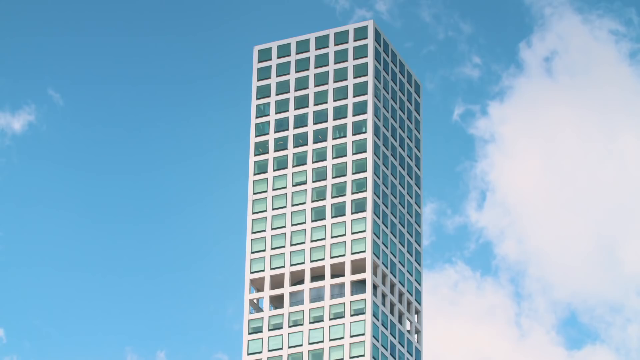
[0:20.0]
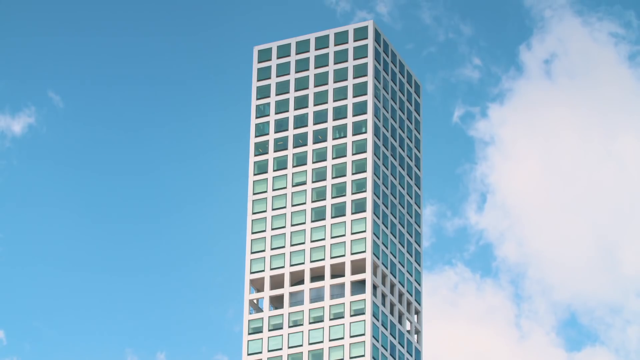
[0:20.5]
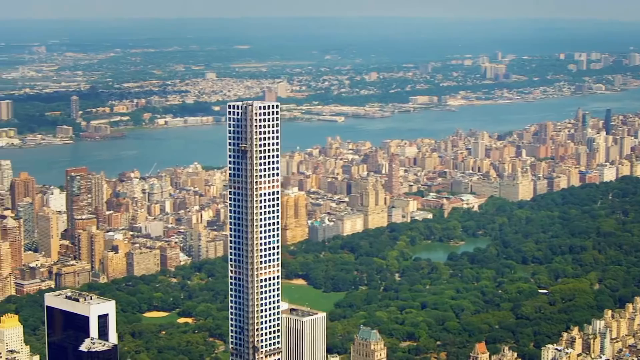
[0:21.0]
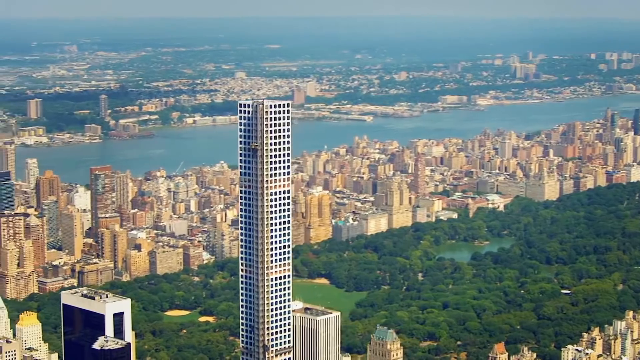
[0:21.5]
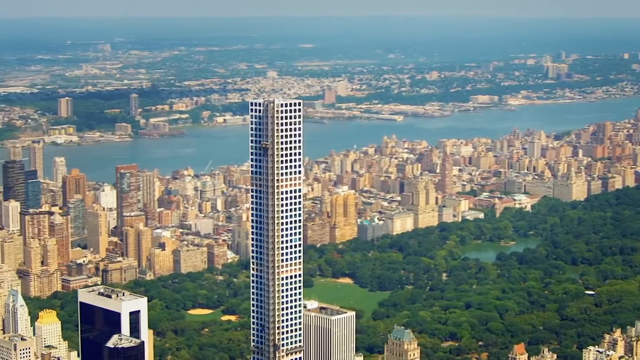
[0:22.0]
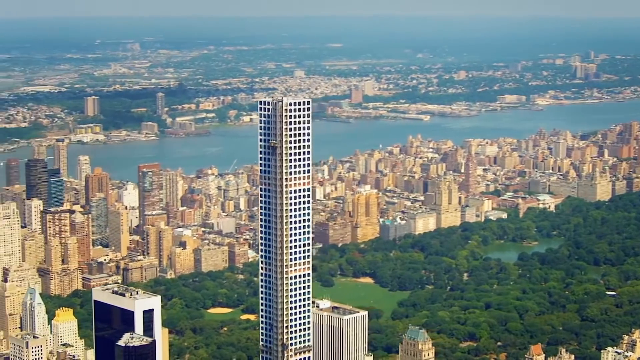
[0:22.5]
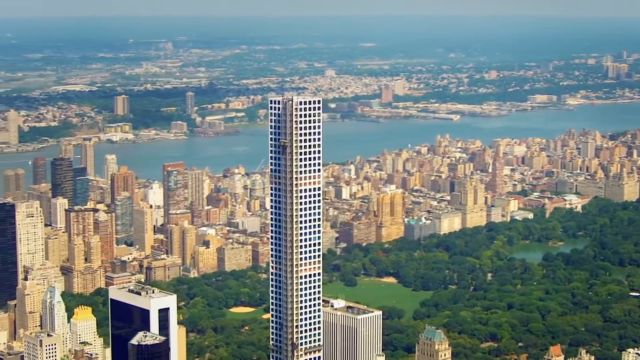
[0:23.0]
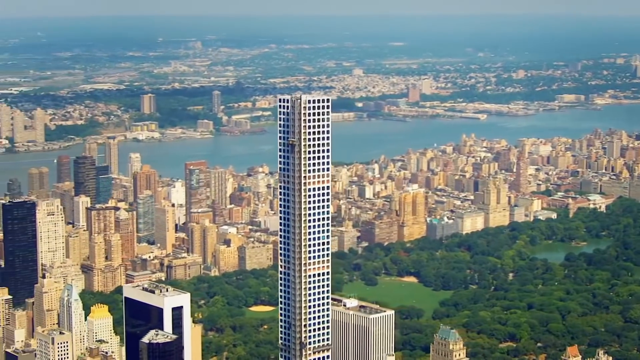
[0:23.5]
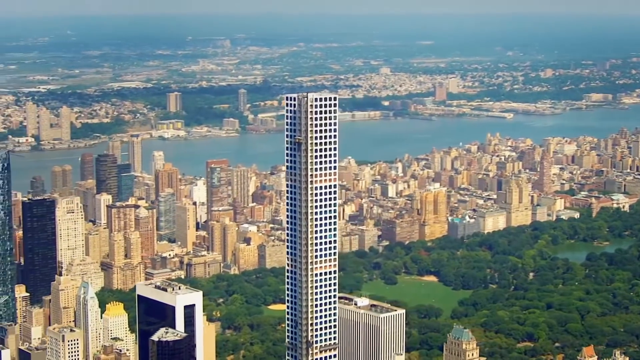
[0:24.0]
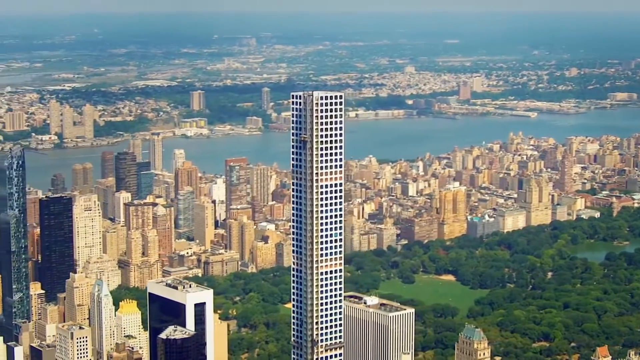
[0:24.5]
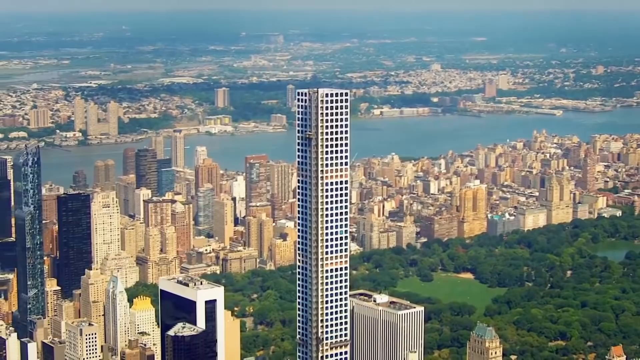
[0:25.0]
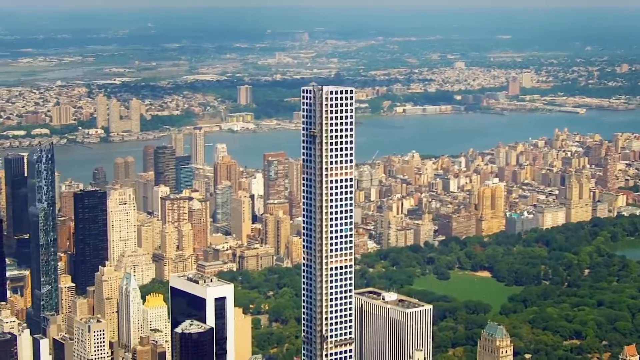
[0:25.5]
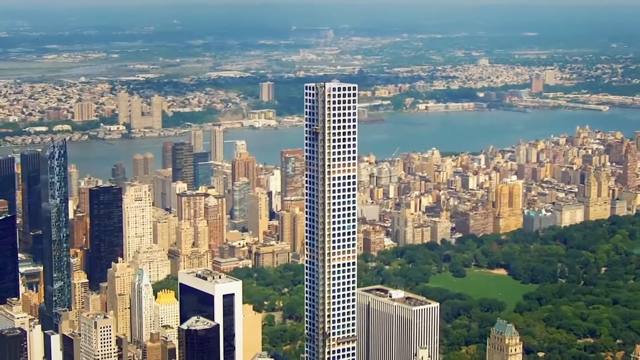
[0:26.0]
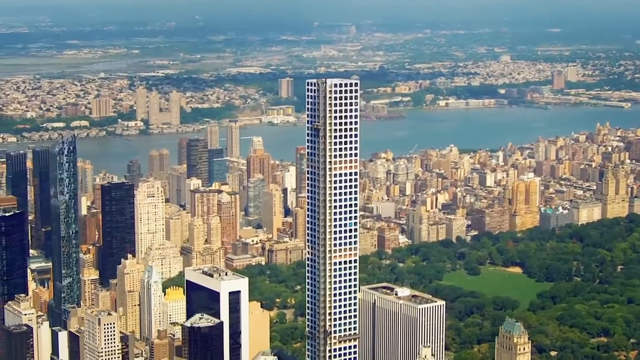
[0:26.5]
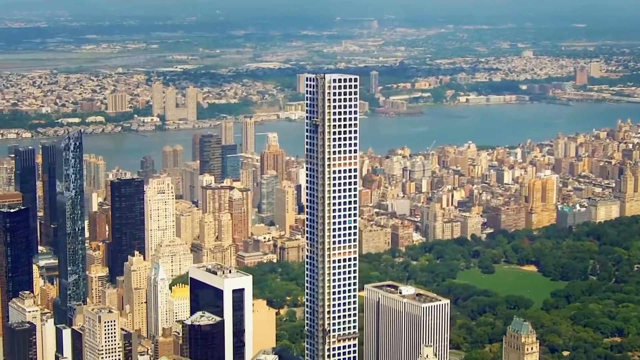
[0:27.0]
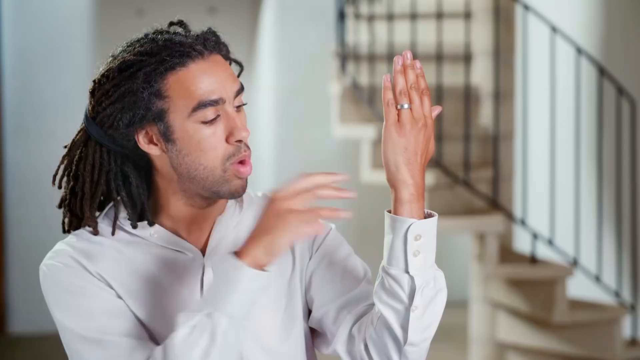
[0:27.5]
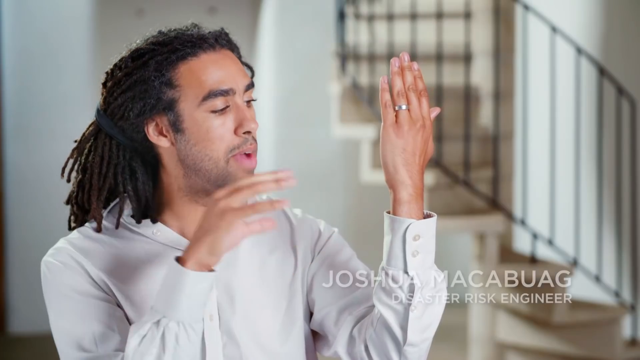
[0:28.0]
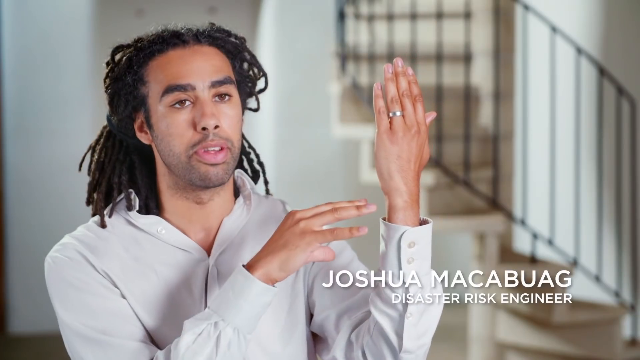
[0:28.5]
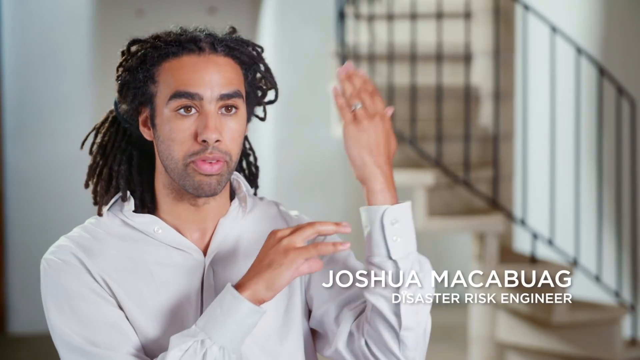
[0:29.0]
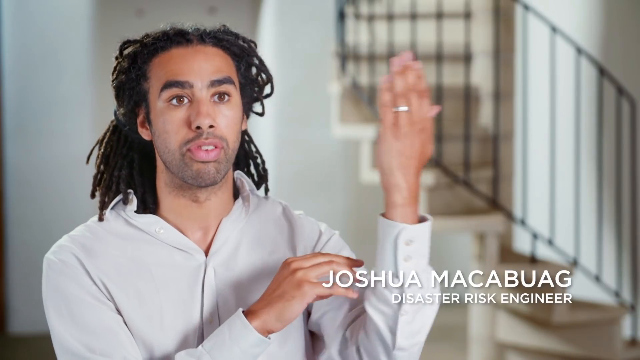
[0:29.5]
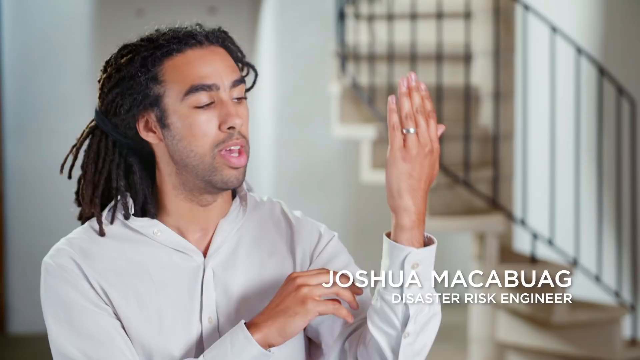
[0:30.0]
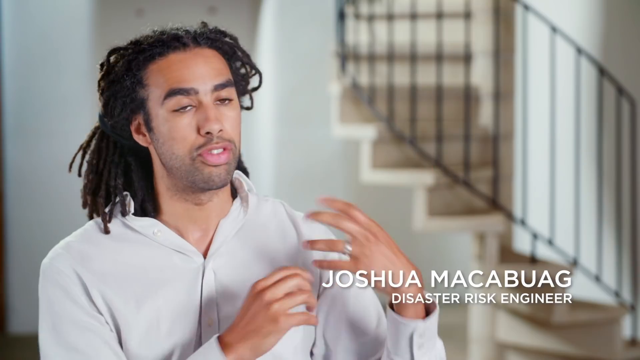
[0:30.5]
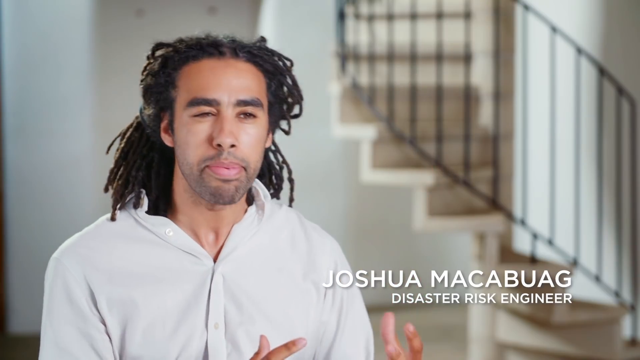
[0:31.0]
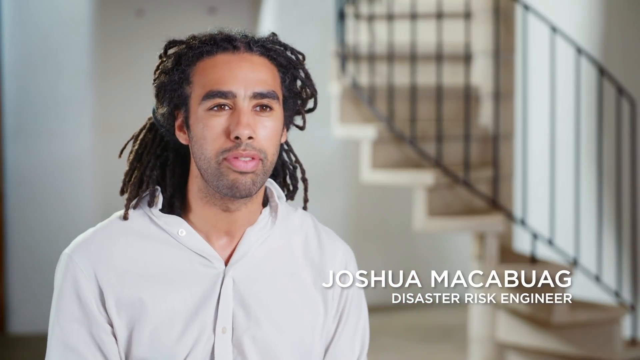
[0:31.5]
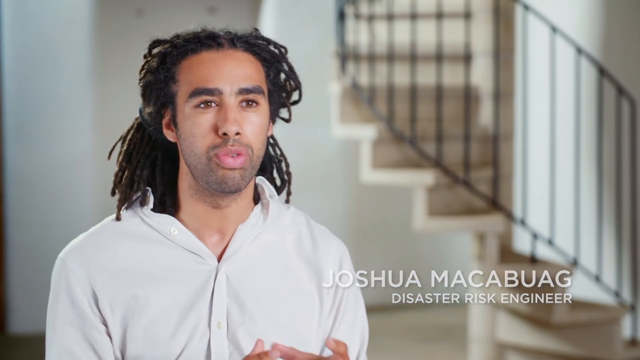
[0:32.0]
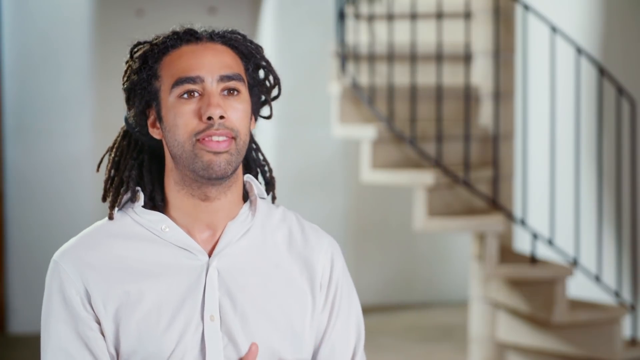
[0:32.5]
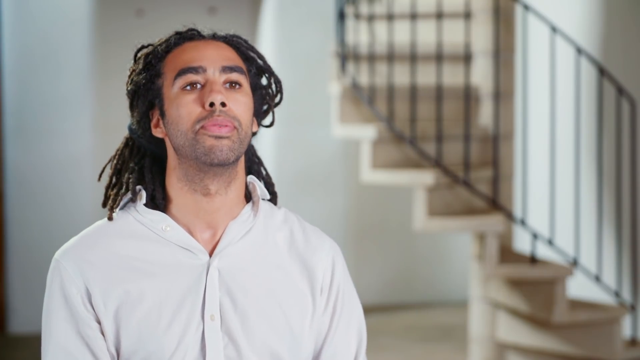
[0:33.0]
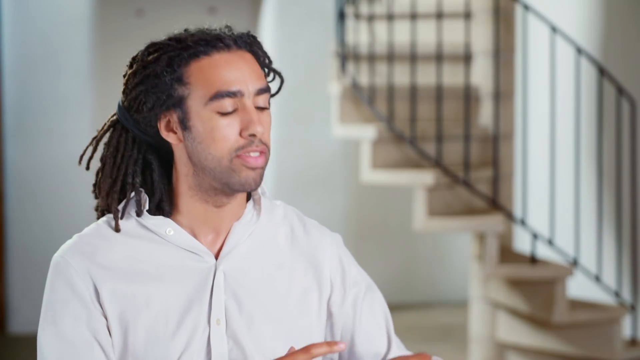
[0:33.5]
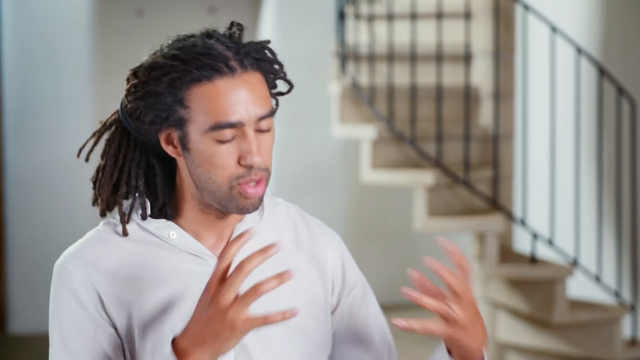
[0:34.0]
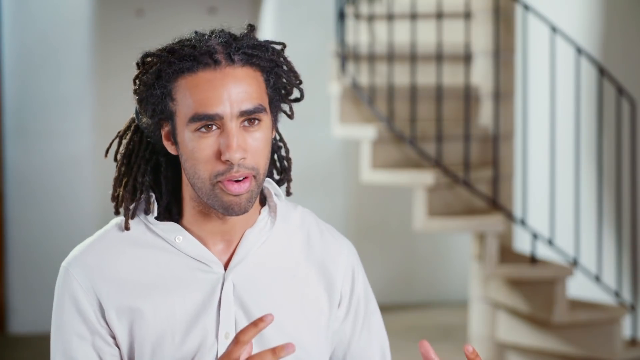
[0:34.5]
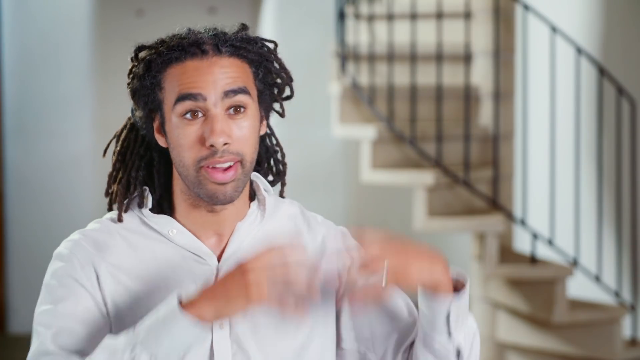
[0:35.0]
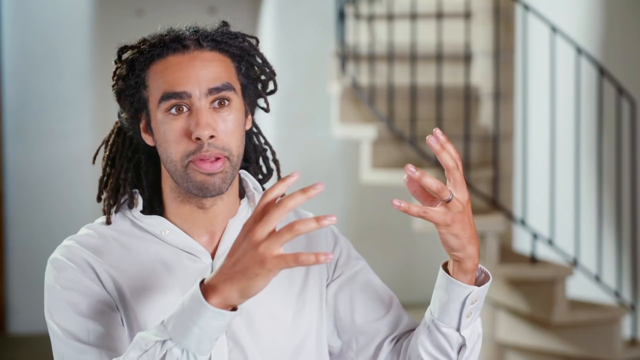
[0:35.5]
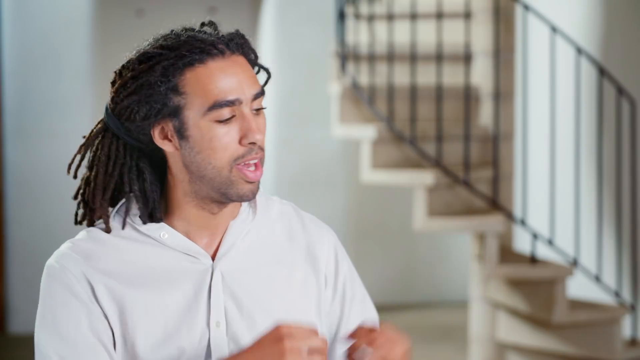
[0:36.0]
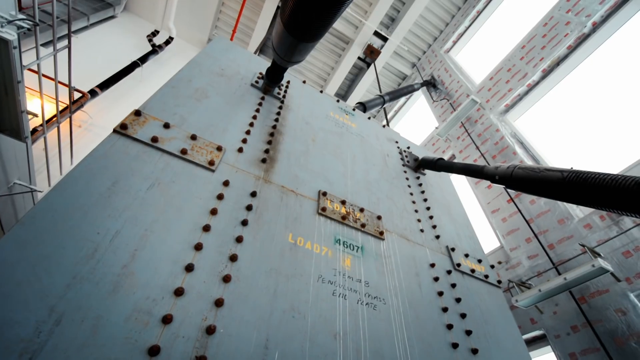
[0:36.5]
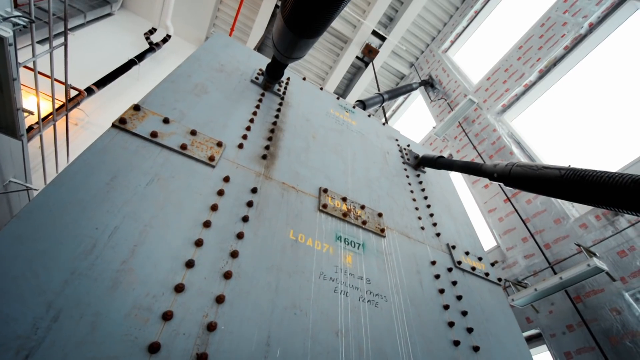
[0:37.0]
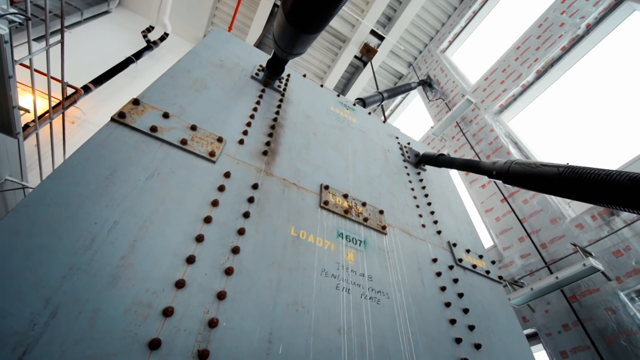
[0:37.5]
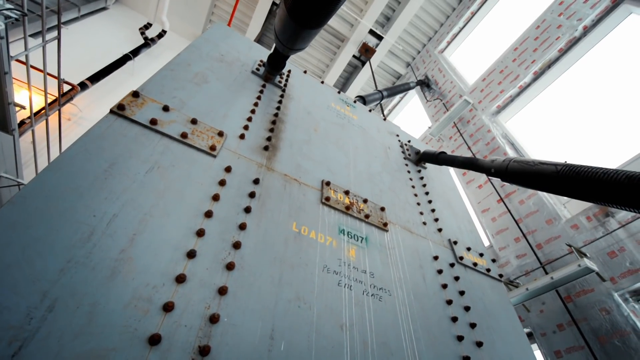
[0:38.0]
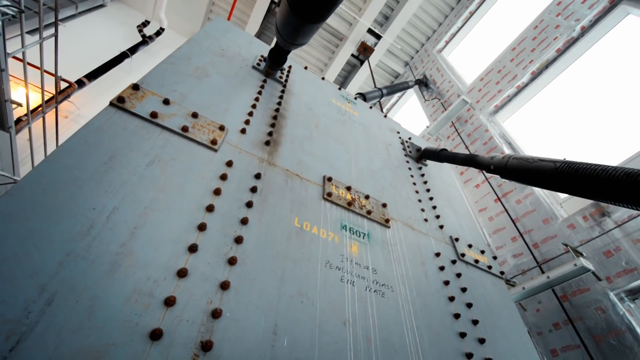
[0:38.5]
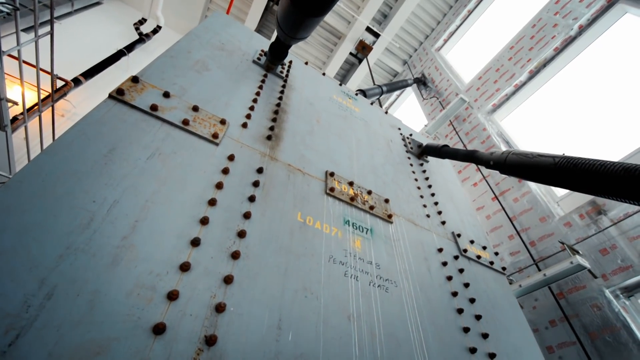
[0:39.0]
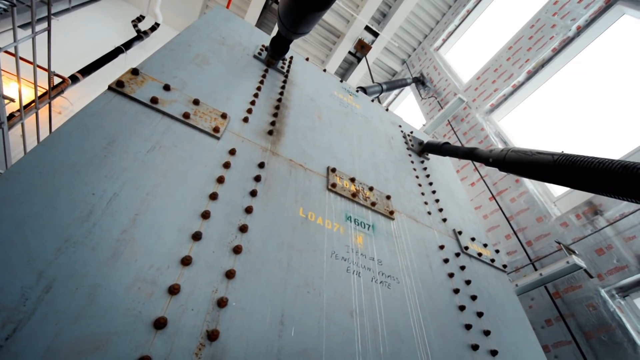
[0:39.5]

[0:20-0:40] A skyscraper is shown, possibly from the view of a drone or a helicopter. The extremely tall building is essentially one big rectangle, with perfectly square windows on all sides. As the camera pans around, a smaller building is visible next to it, then some space, then a few more buildings, then a large area of green, possibly Central Park or another park, then many tall skyscrapers, and then a river, with more buildings across from the river. The video quickly switches to a man talking. He looks African-American, with dreadlocks pulled back into a wide ponytail. He has his left hand up as if demonstrating something and wears a wedding ring on that hand. Words next to him read "Joshua Macabuag" and, underneath in capital letters, "DISASTER RISK ENGINEER".